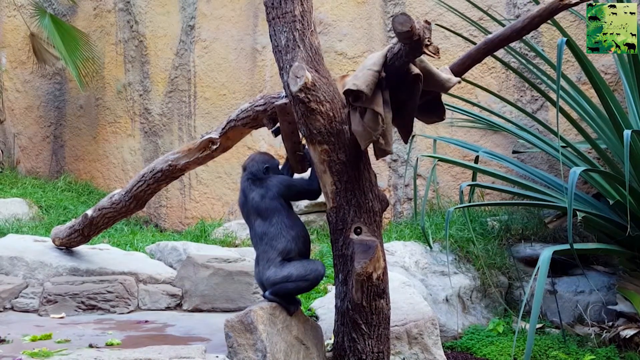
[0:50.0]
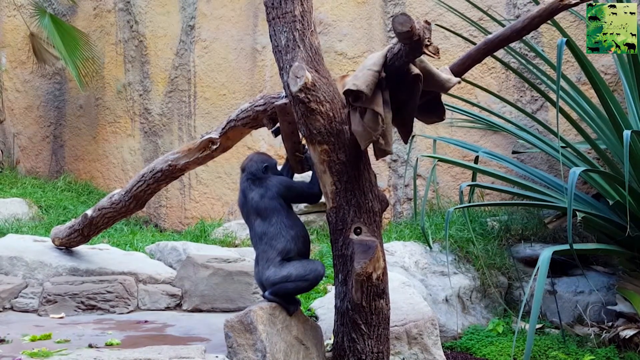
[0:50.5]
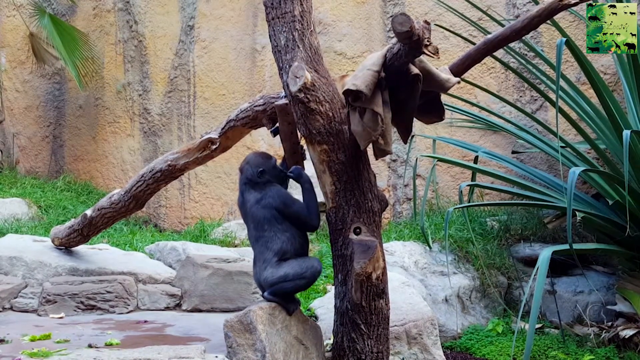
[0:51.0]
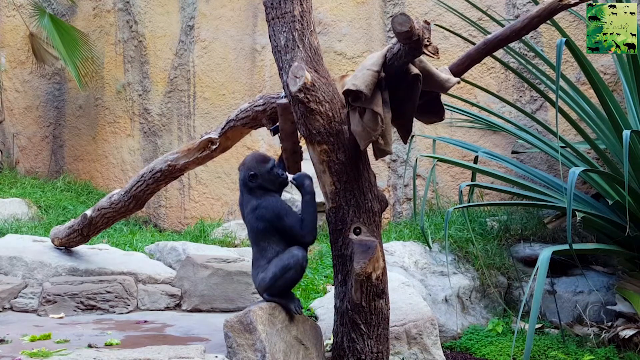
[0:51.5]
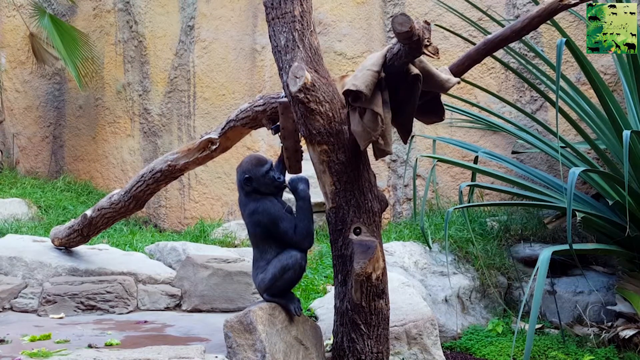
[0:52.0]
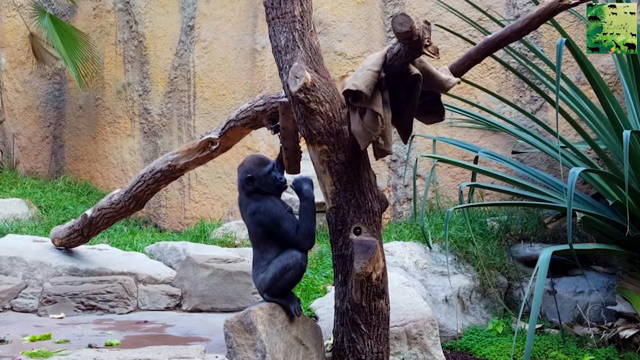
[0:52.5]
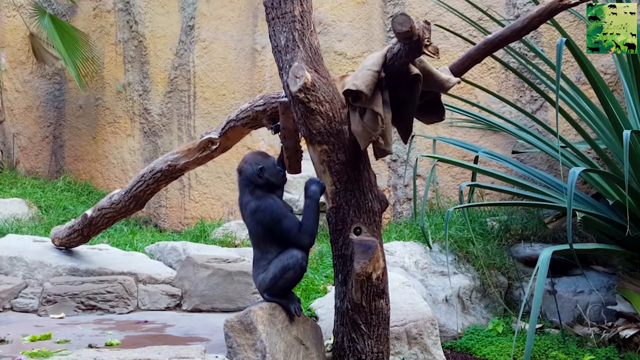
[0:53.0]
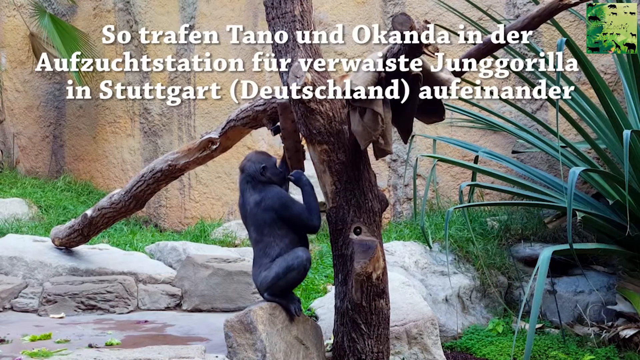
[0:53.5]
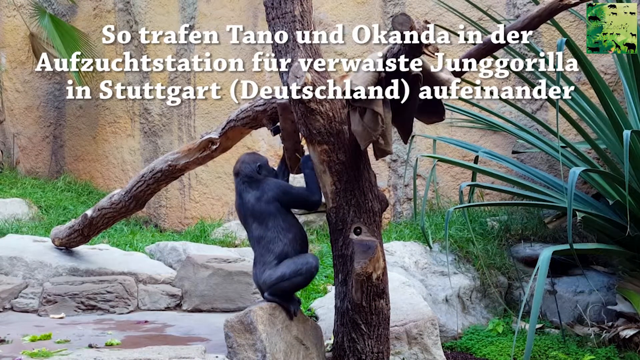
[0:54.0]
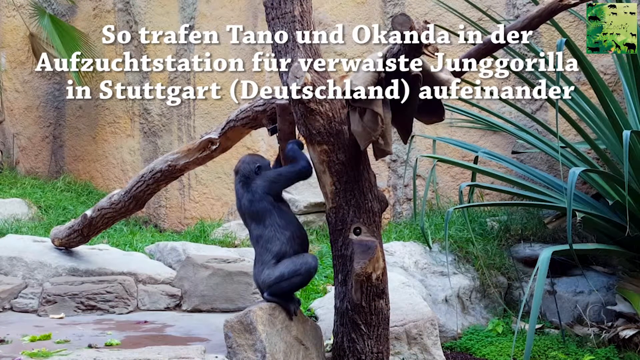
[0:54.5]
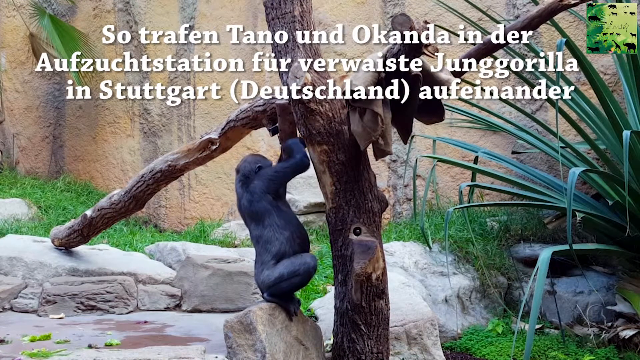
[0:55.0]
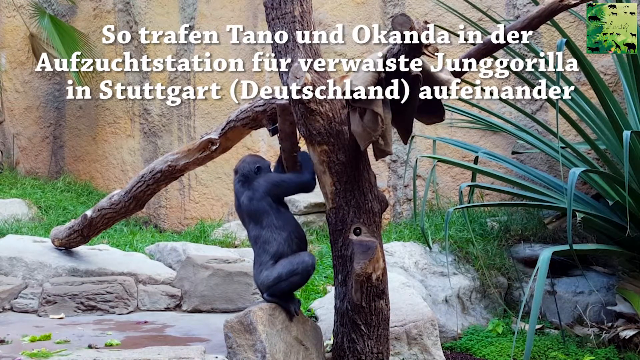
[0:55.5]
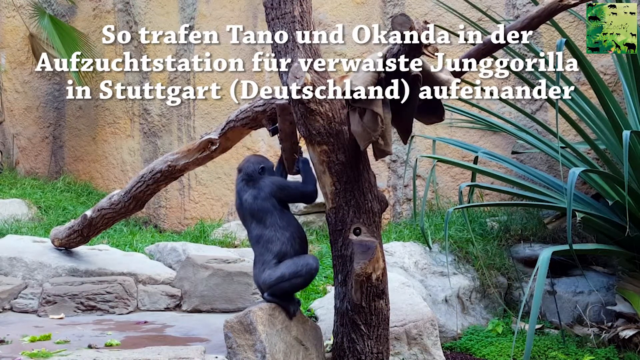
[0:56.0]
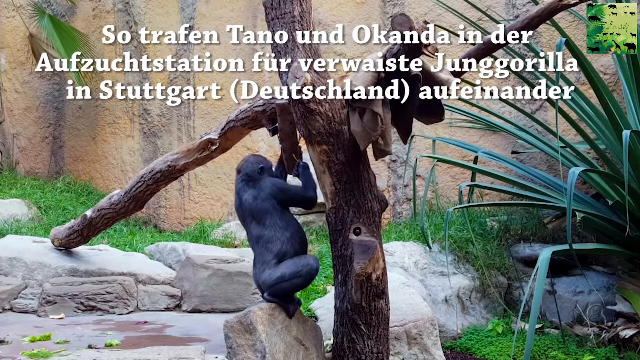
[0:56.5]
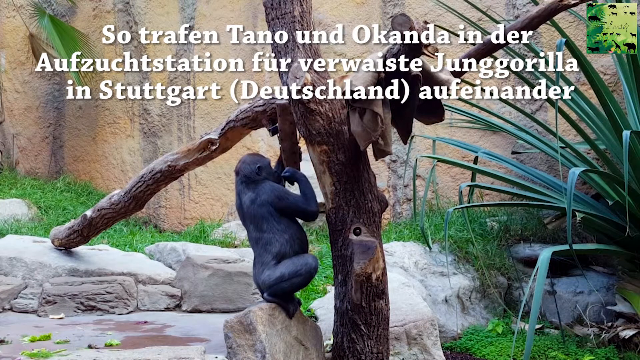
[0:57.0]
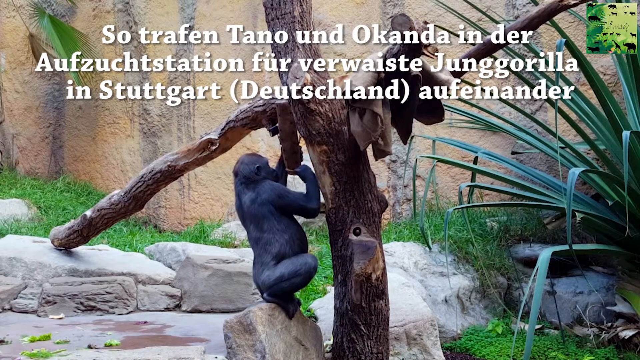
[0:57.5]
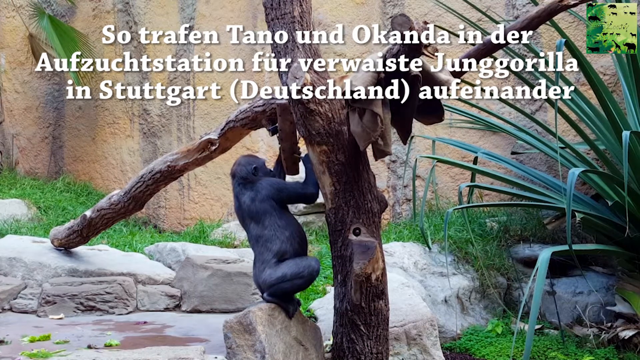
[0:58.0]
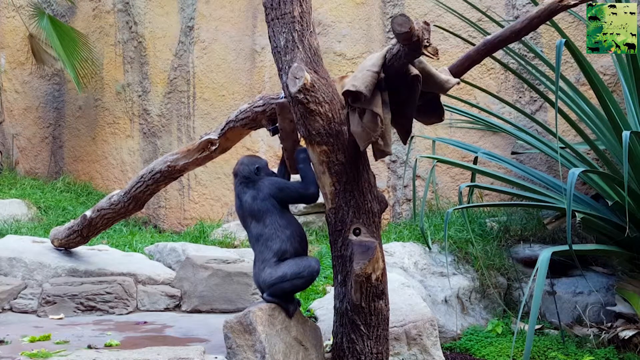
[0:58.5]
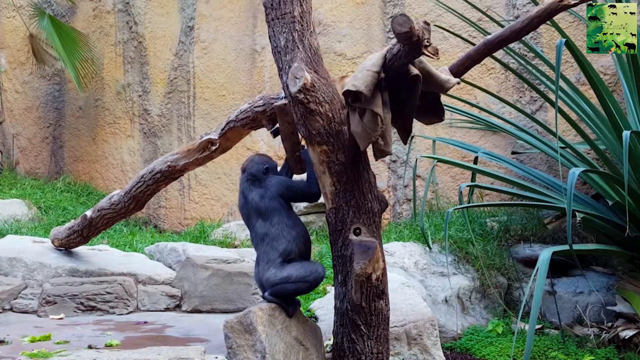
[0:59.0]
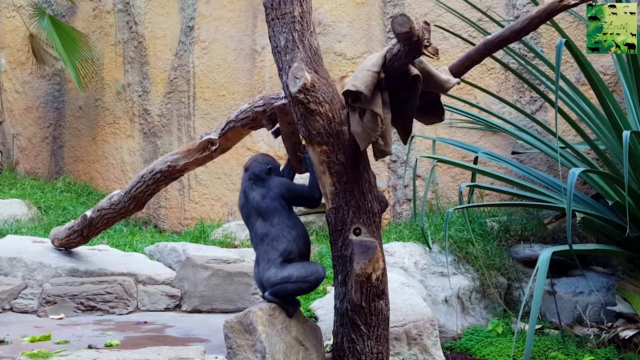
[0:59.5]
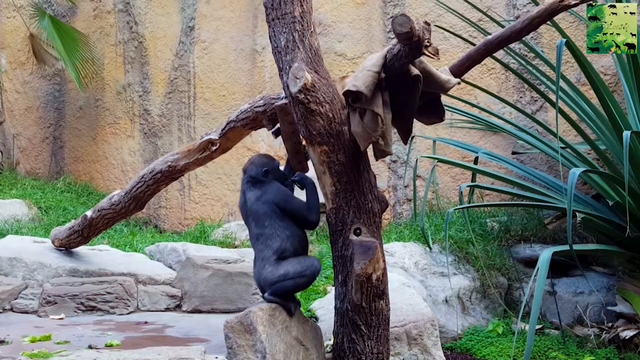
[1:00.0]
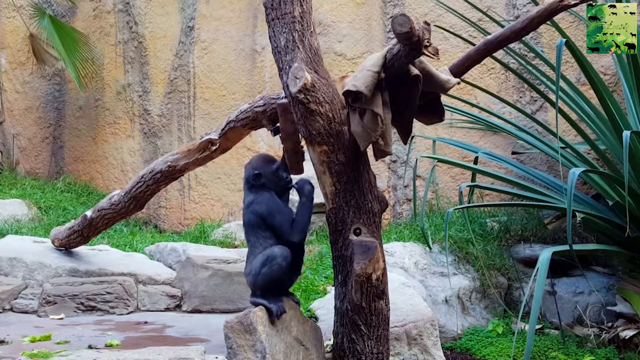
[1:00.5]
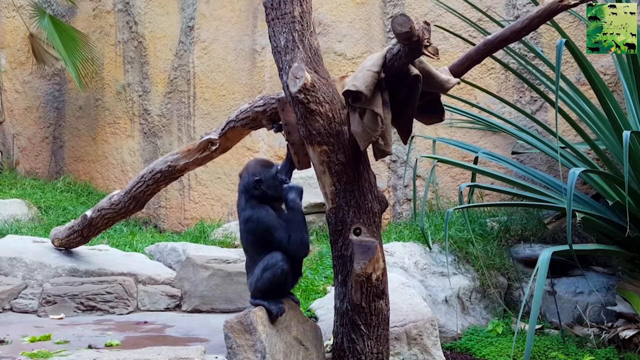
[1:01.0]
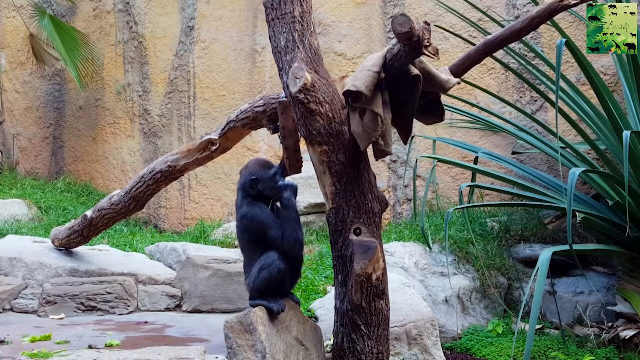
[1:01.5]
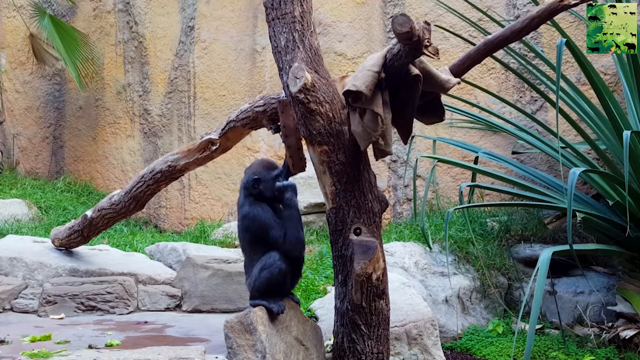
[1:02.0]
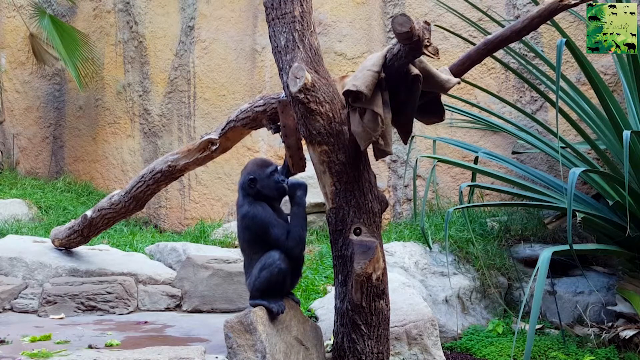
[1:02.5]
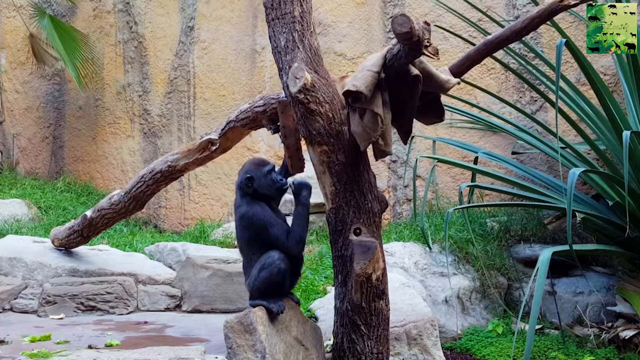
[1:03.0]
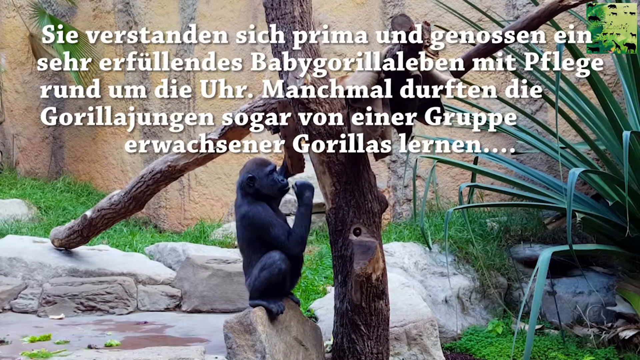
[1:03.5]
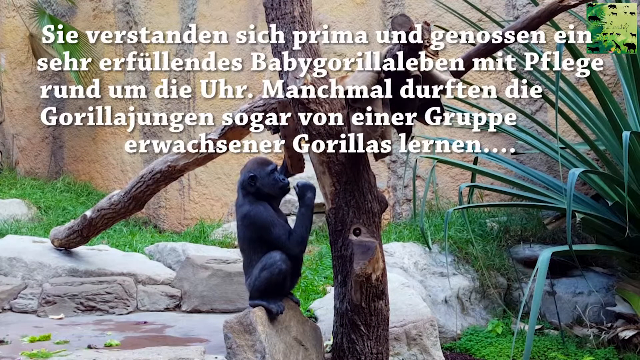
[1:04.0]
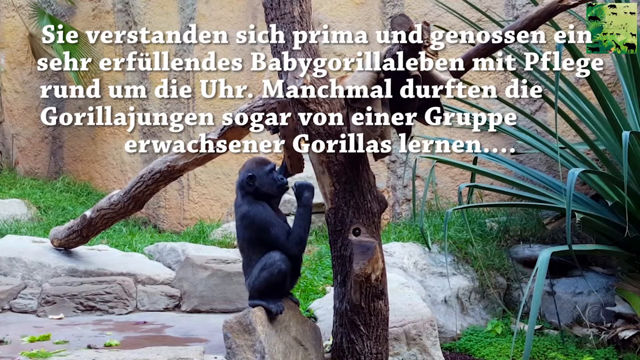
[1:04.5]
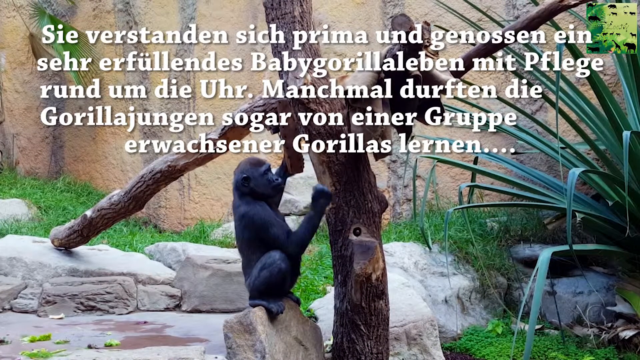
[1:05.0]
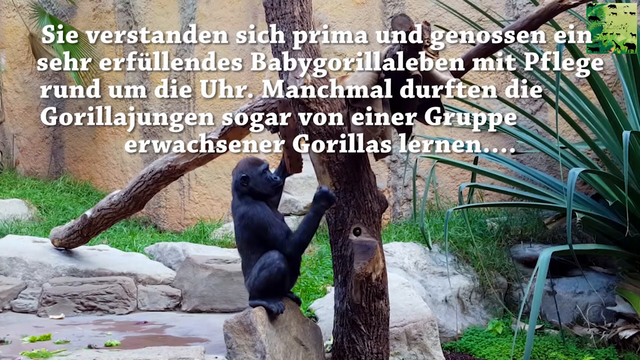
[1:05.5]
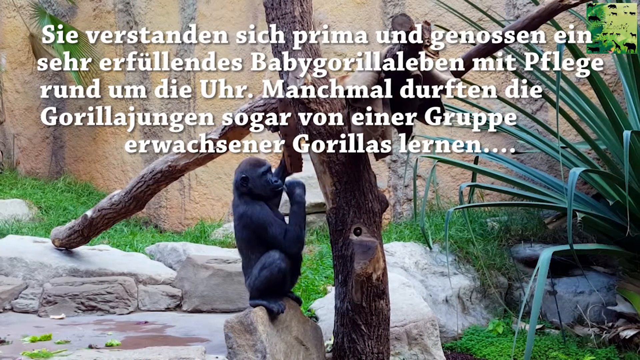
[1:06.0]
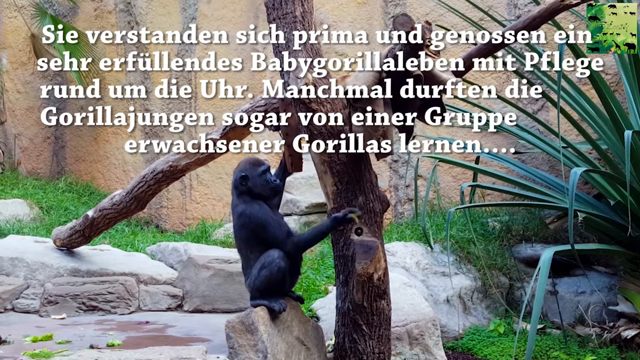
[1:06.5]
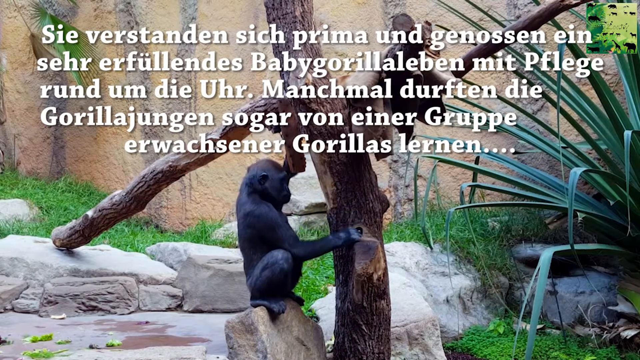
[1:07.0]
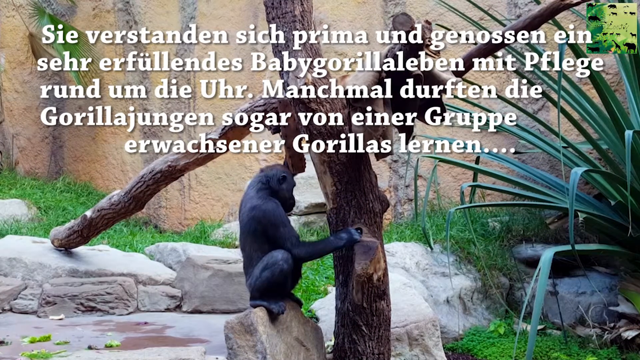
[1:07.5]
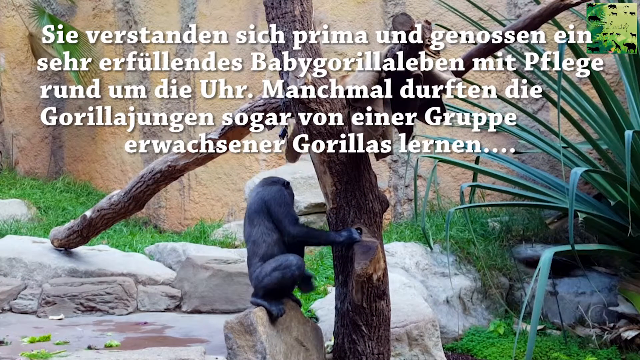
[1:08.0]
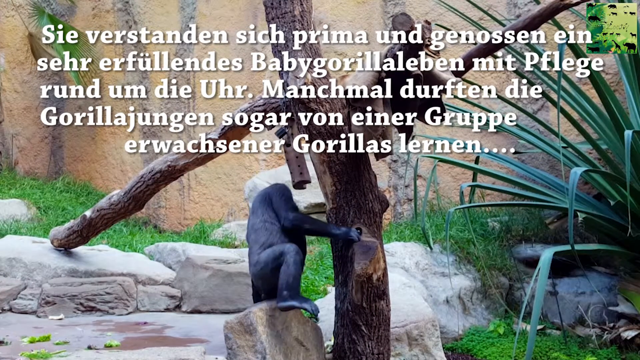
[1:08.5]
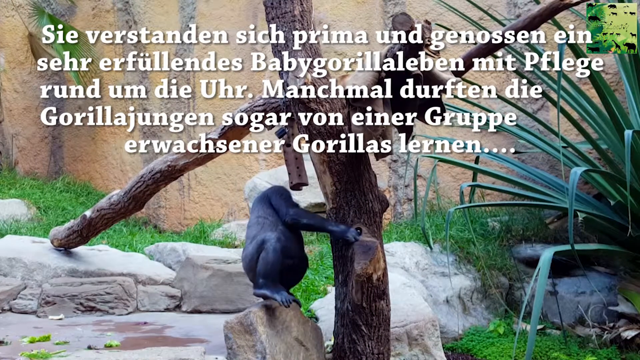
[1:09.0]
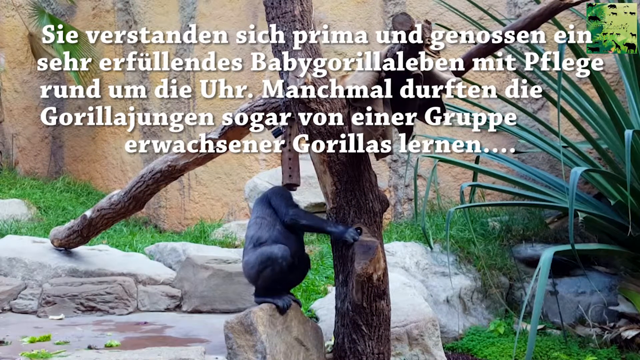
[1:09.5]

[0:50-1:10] The monkey keeps alternating between putting the object it is using to poke holes, or as a tool, into the piece of wood, putting it in its mouth, and putting it back into the wood; it is not clear exactly what this does. A new piece of text pops up at the top of the screen, this time three lines long. On the right side of the tree are some brown, shriveled dead leaves; the trees look like they might just be pieces of wood propped up to mimic a live tree. The text changes once again to another longer piece of text taking up about half the screen. Toward the end, the monkey stops its motions and starts looking down toward its feet on the side nearer the back wall, where some grass is included in the habitat.